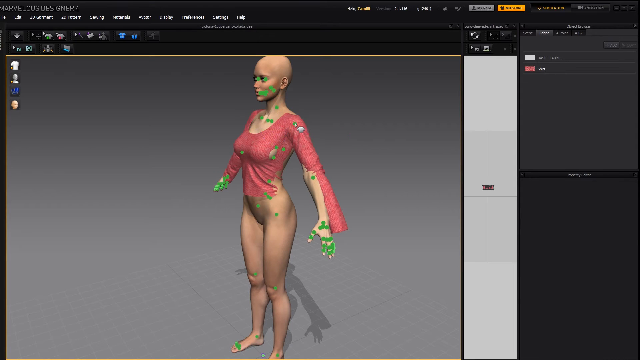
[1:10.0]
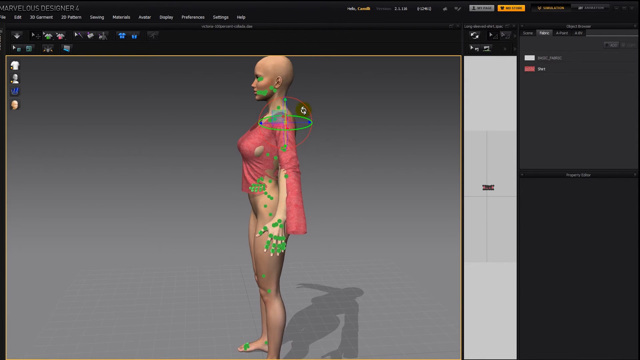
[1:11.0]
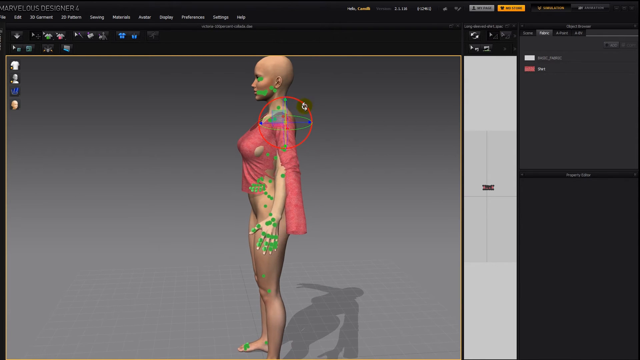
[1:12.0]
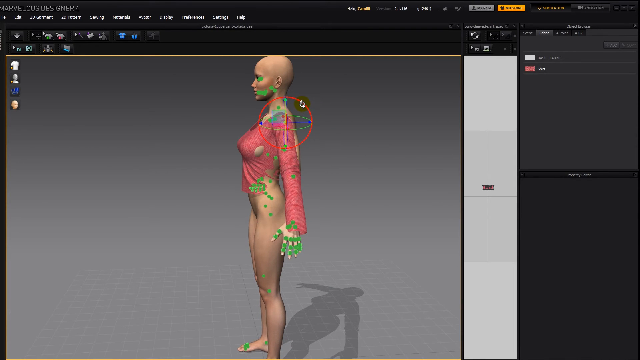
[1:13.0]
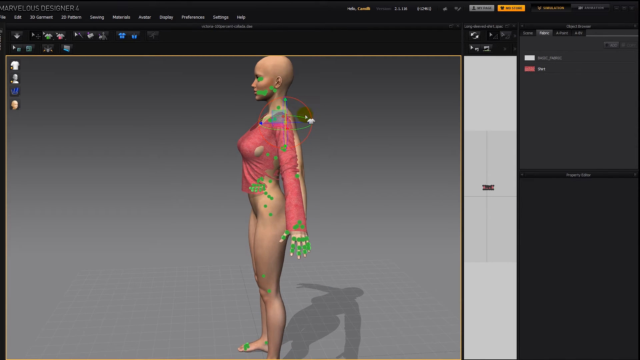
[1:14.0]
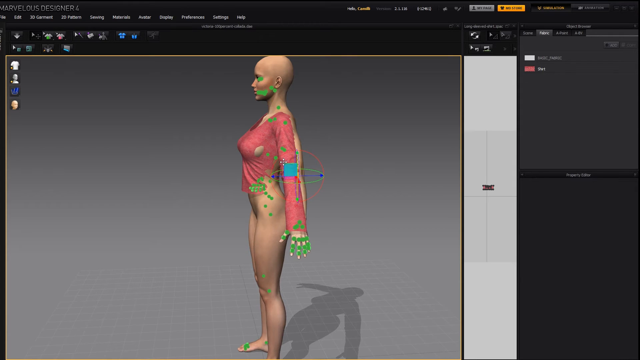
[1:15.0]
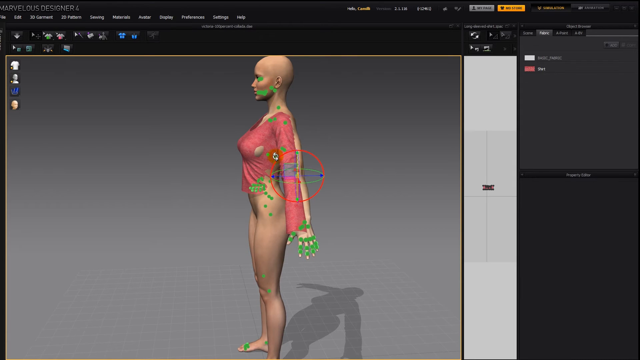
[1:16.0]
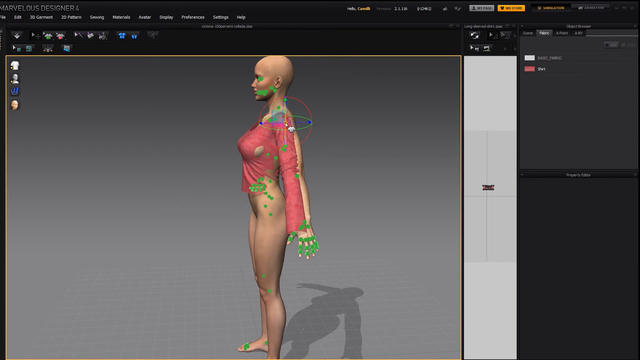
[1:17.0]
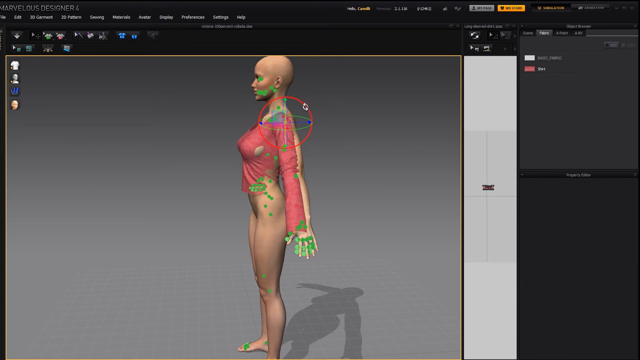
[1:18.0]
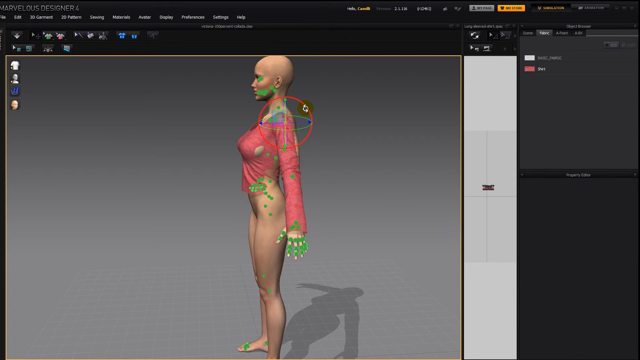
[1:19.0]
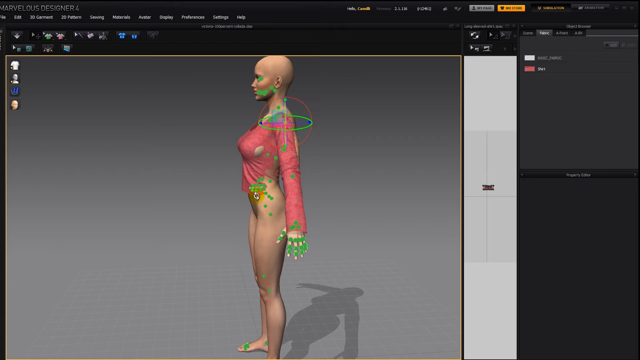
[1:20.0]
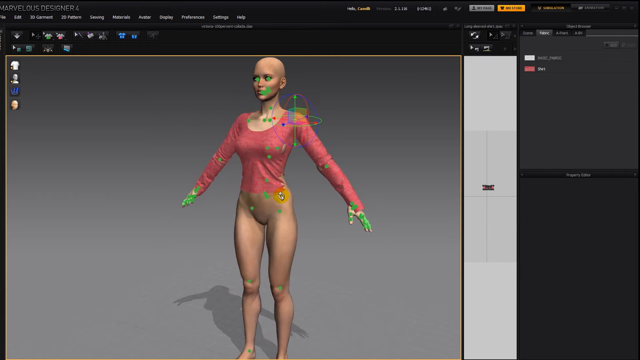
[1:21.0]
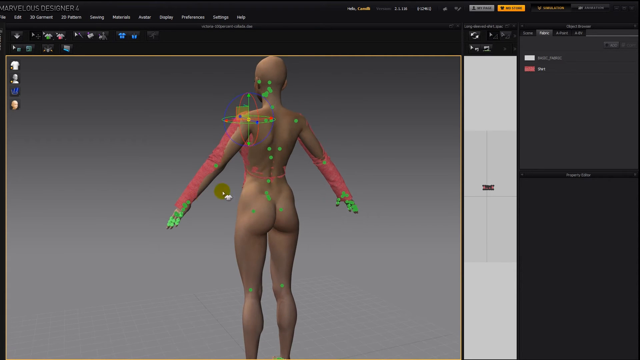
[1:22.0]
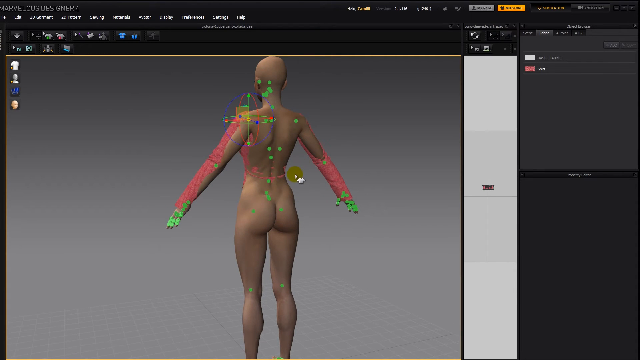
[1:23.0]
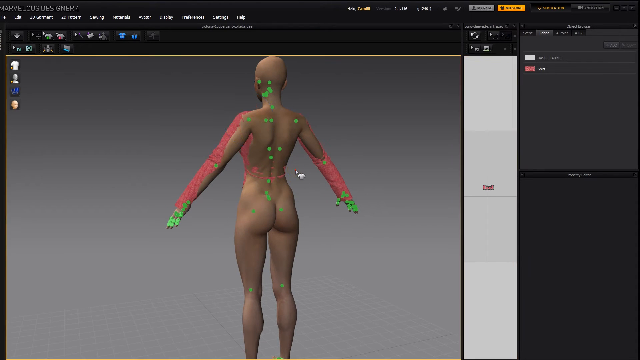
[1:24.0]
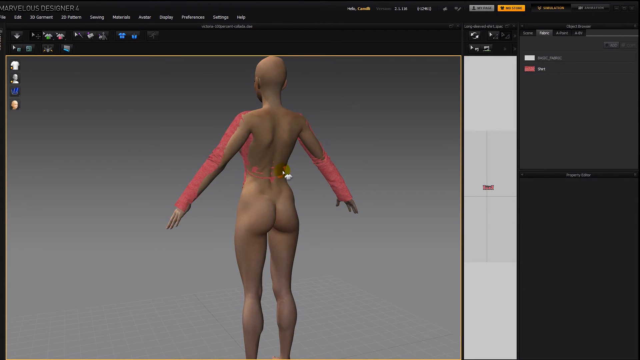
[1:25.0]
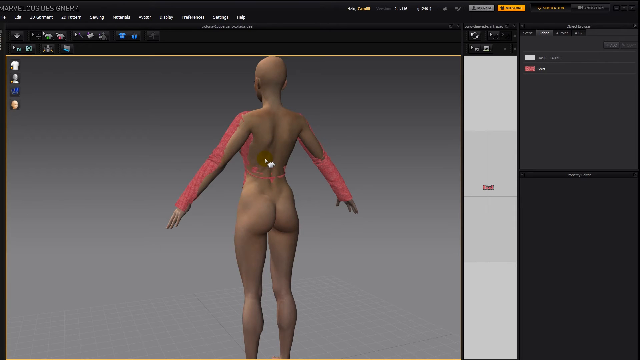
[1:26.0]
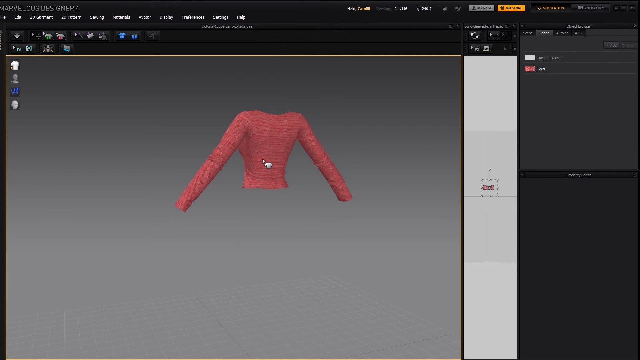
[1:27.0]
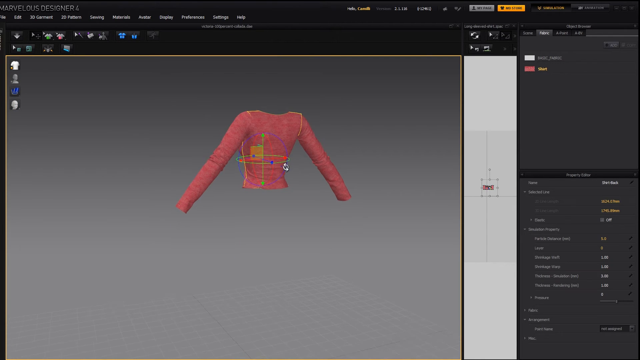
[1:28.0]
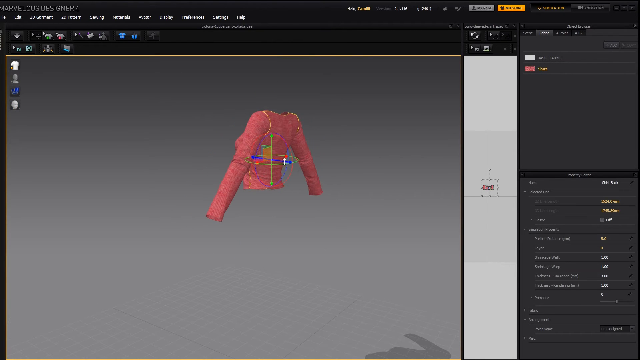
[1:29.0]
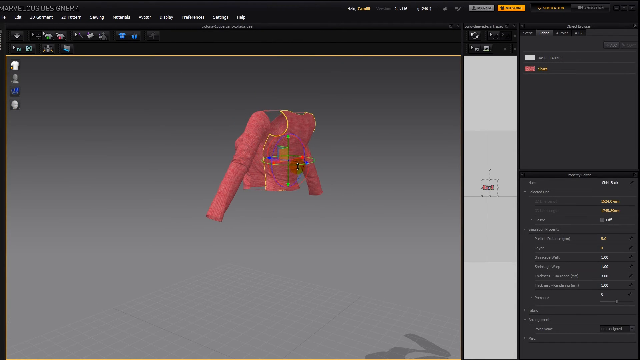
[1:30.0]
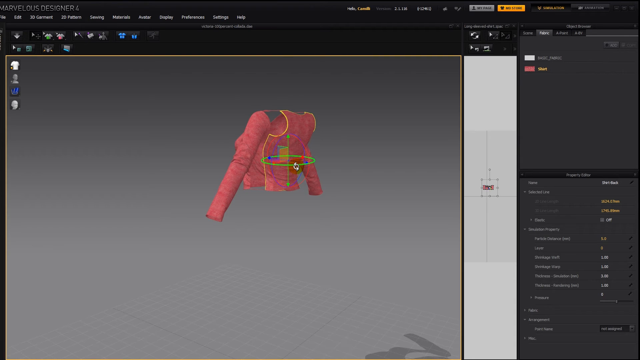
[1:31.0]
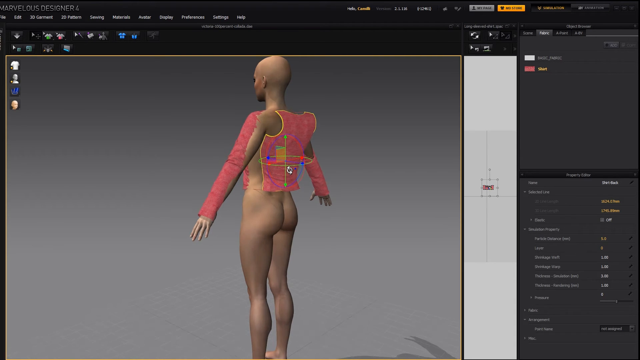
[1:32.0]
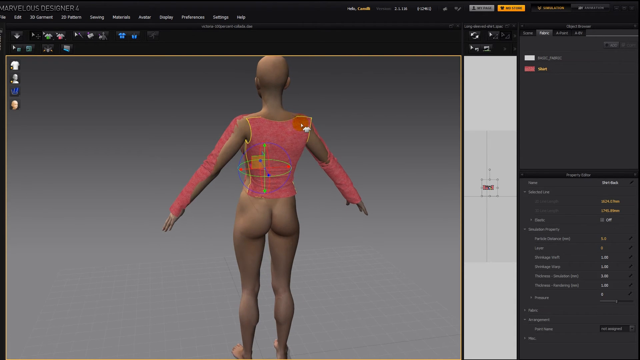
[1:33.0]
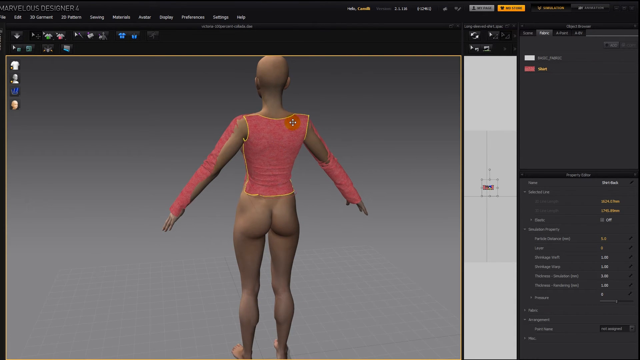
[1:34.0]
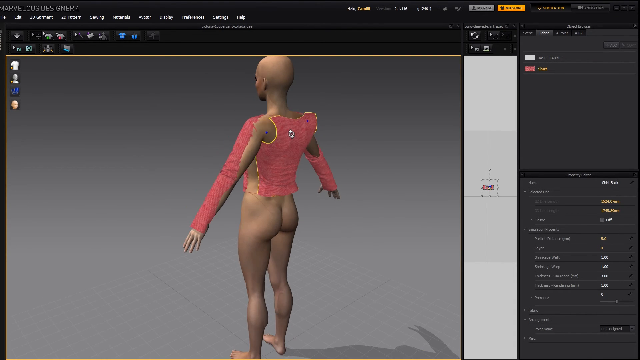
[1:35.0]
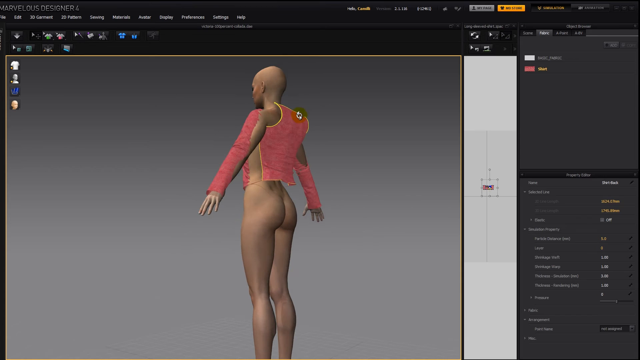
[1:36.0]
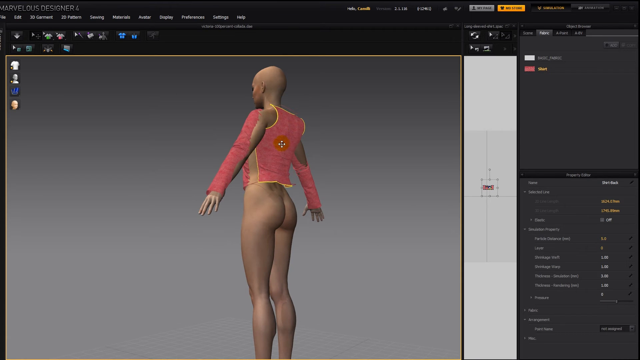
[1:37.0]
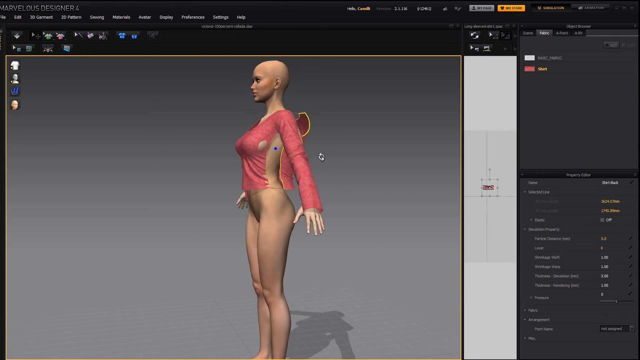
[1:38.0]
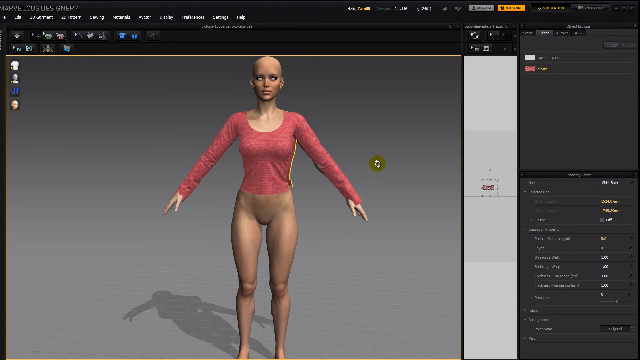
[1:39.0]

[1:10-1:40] She is spun around a little more, and the left arm is turned into its sleeve just as the right arm was. Her back side is then shown, where the shirt does not fully cover her back. The animator makes the character disappear and pulls the back side of the shirt out slightly so the shirt is visible on her back. Her sides then show that the shirt is not covering her completely.